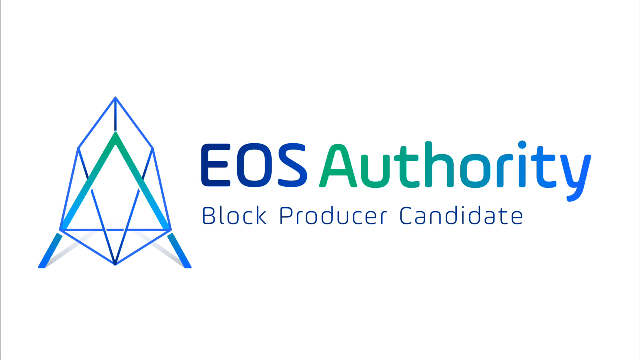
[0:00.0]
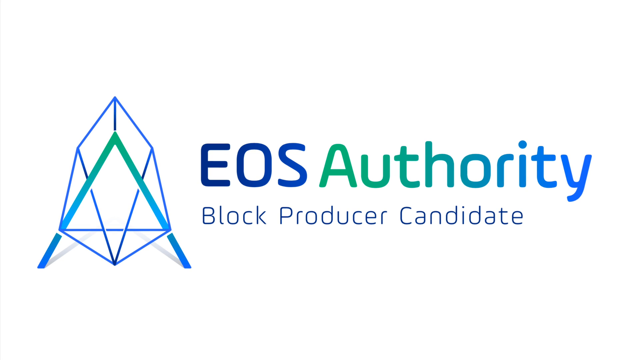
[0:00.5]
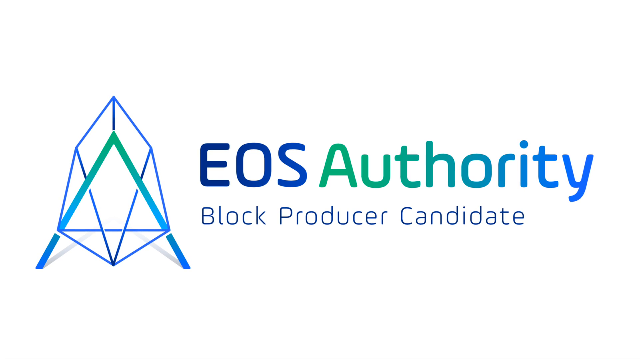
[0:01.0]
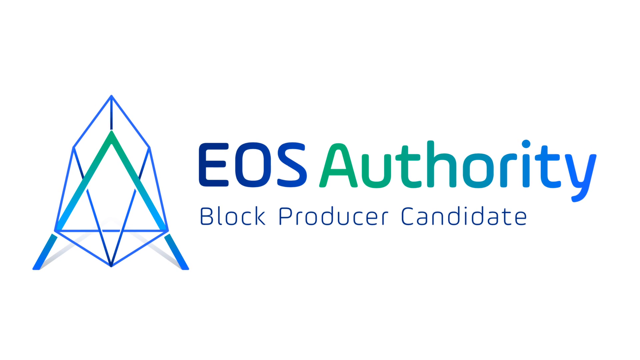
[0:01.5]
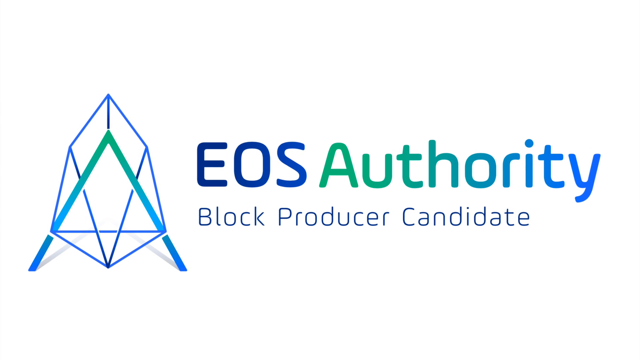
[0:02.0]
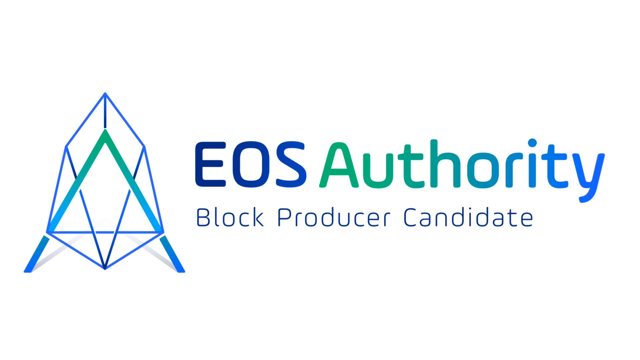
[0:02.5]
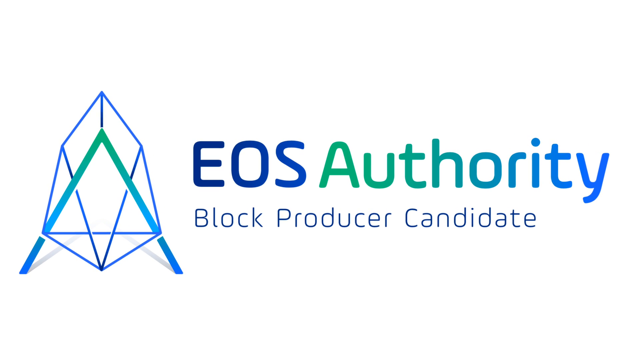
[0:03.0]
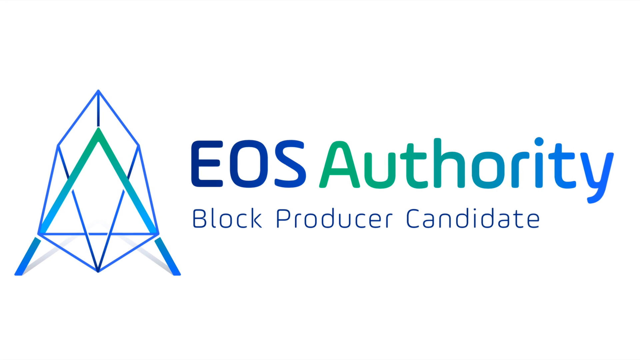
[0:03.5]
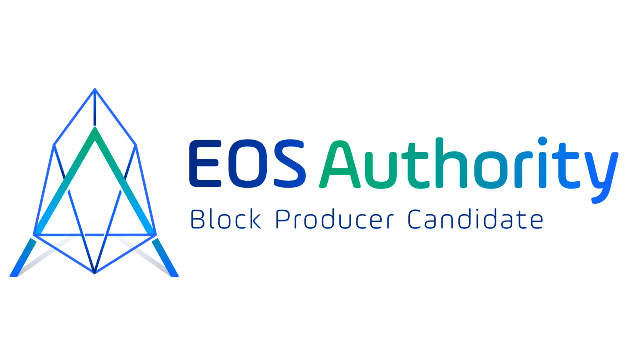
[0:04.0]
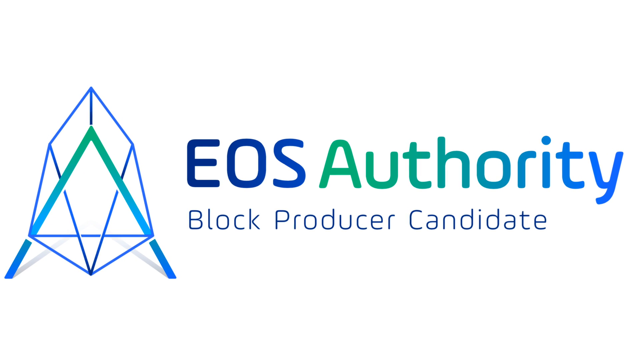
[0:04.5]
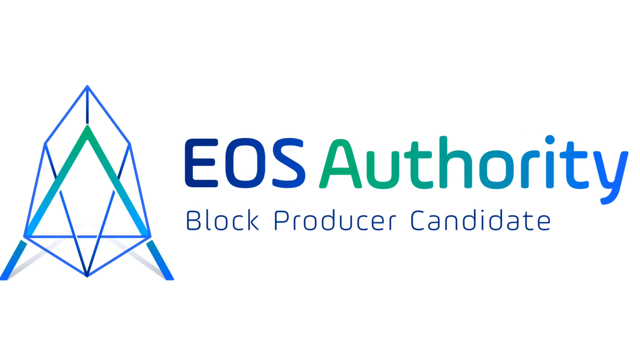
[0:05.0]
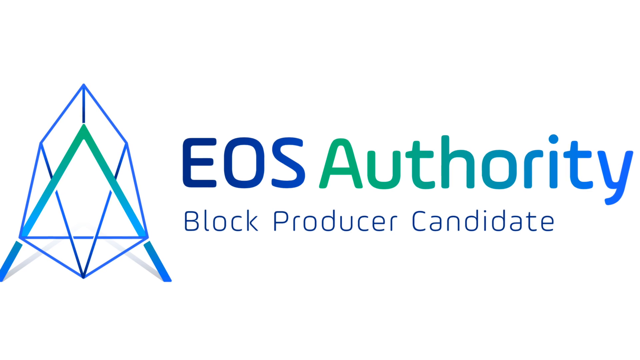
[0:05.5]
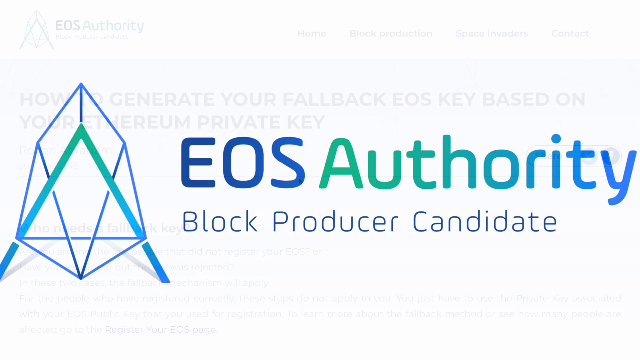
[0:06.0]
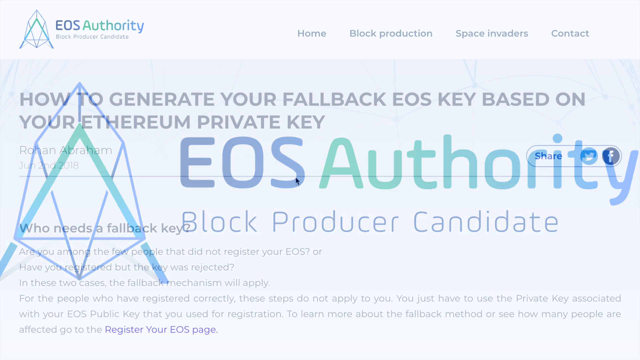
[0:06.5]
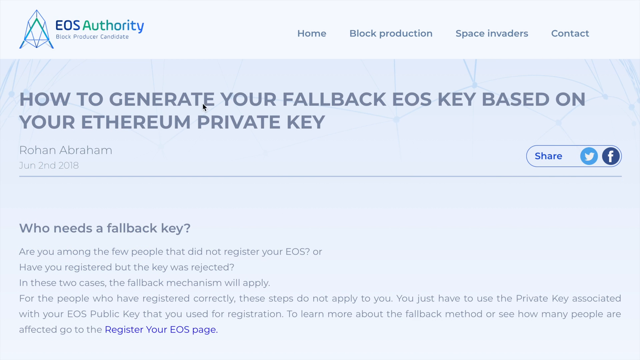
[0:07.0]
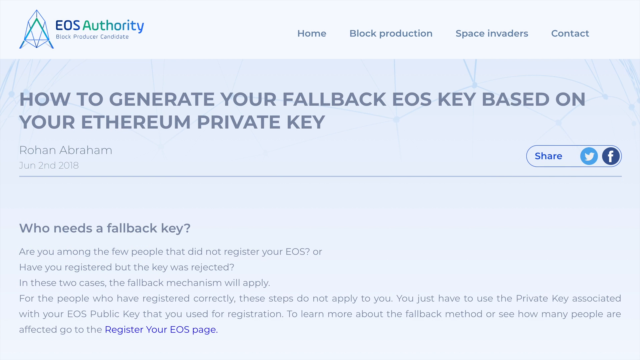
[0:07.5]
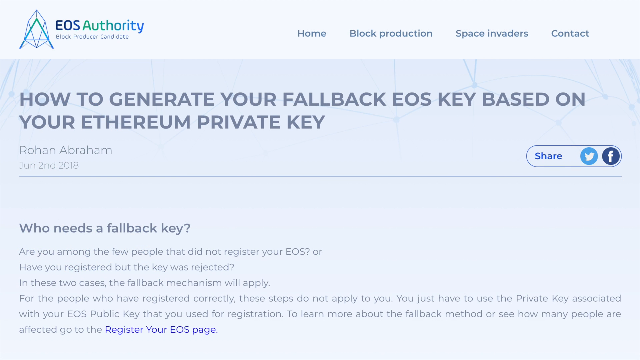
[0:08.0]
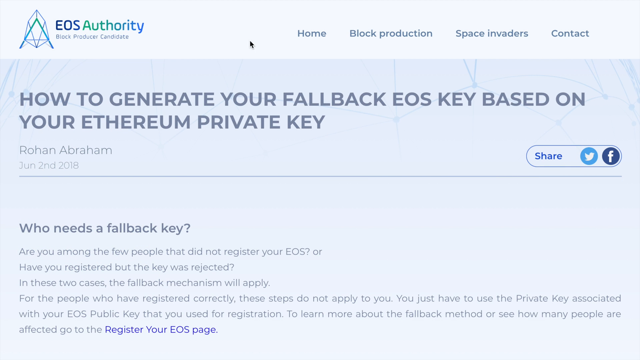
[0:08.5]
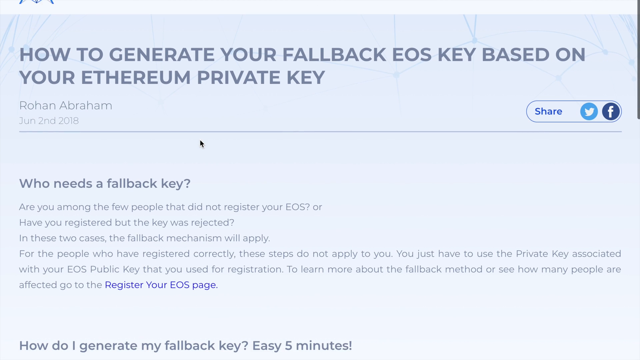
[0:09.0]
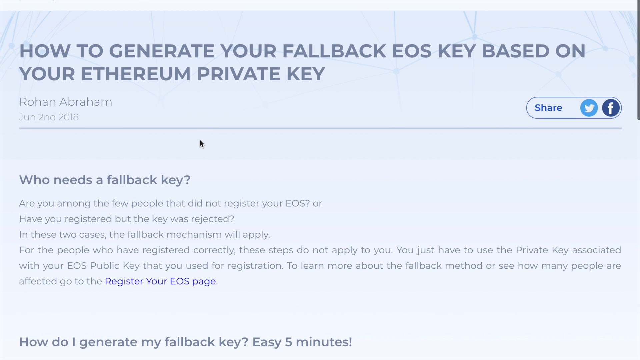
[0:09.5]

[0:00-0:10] A blue and green logo for a website appears, then the video cuts to the website's home page, which shows different options that can be clicked on. The page scrolls down further to reveal more of the information on the site. The page has a mostly white background with blue and green lettering. The logo looks like some sort of spaceship, with a triangular shape and a diamond shape on top of it. Additional information under bullet points is shown only briefly before the video cuts.